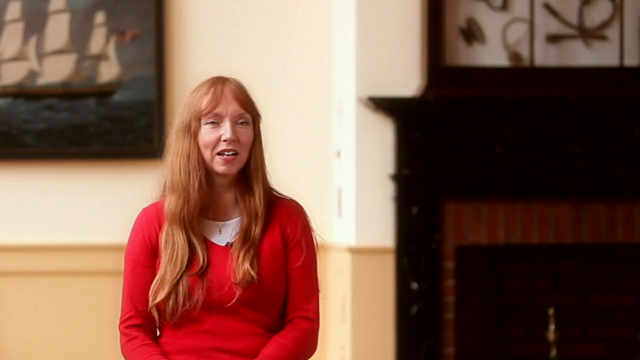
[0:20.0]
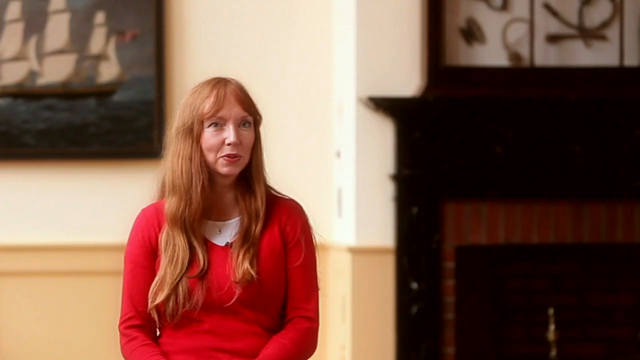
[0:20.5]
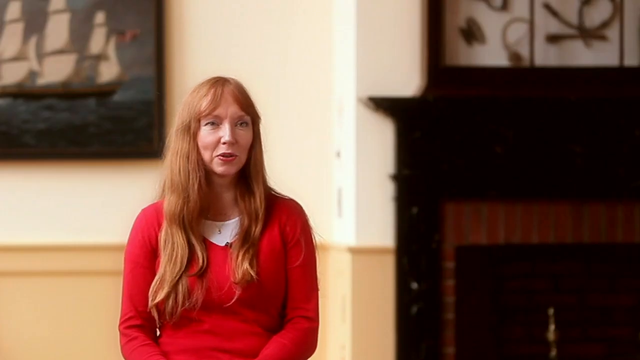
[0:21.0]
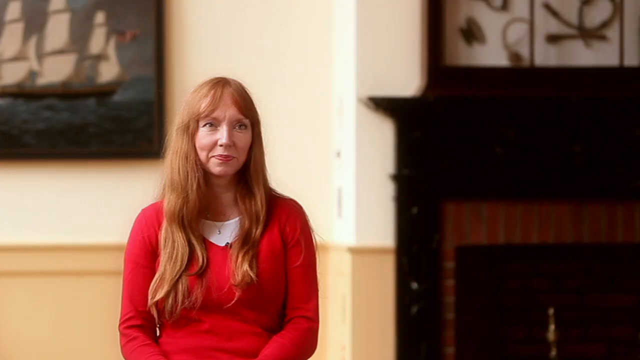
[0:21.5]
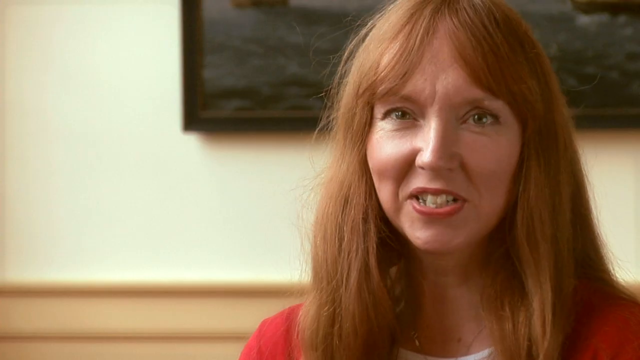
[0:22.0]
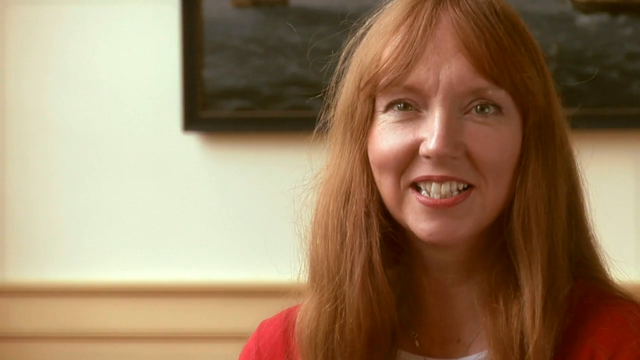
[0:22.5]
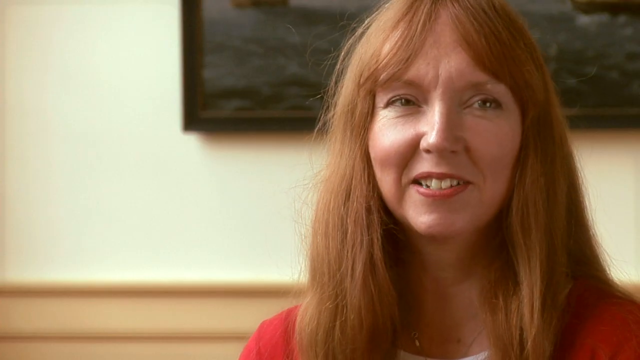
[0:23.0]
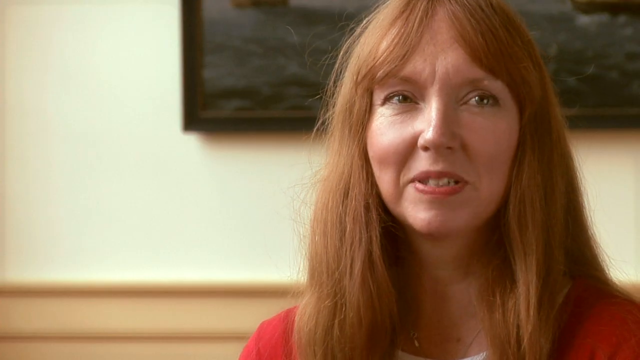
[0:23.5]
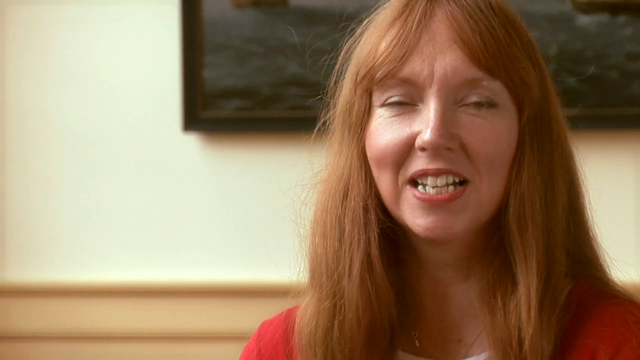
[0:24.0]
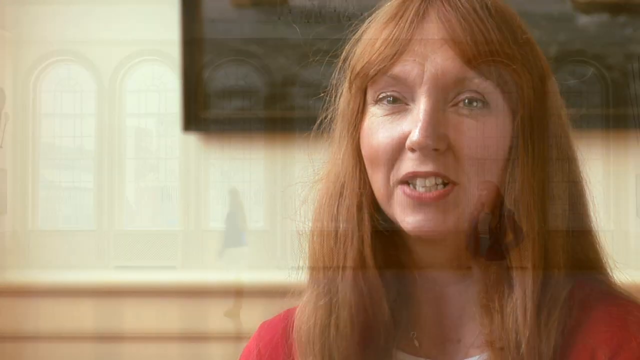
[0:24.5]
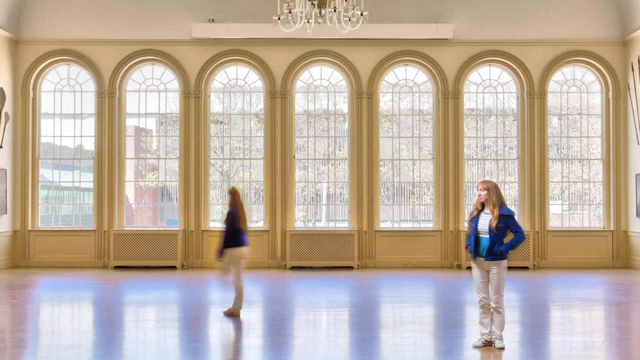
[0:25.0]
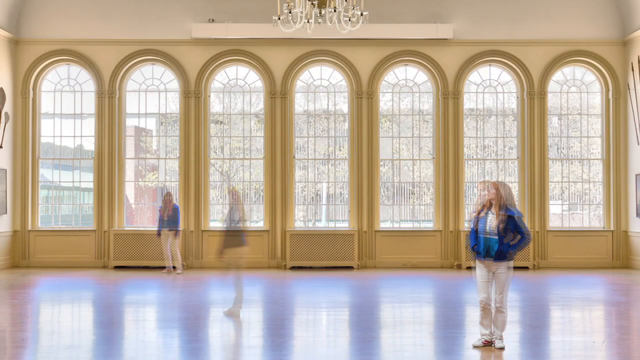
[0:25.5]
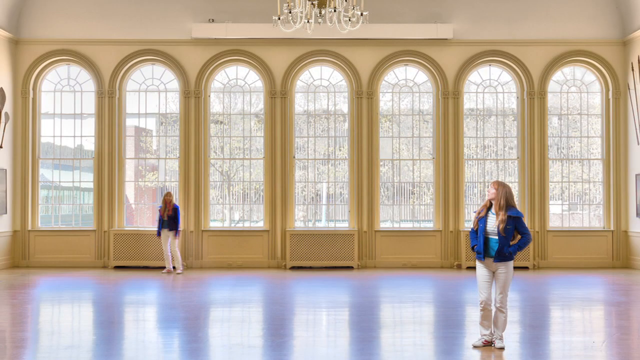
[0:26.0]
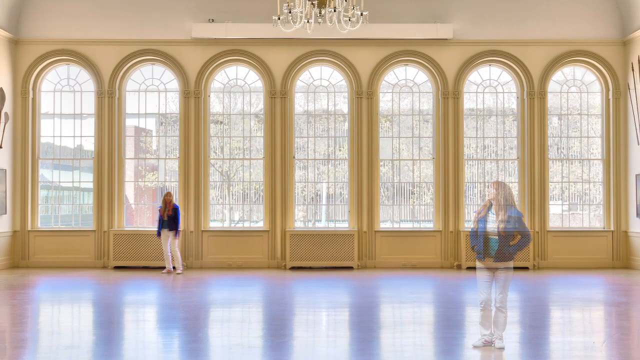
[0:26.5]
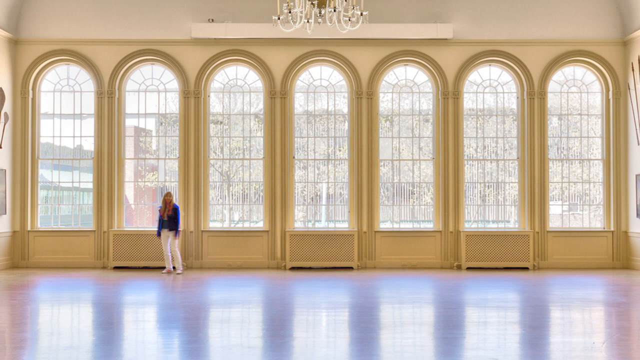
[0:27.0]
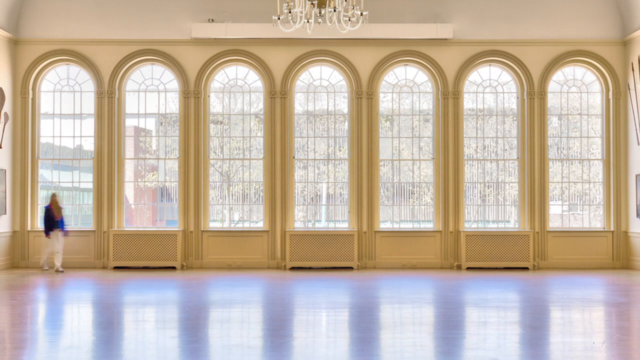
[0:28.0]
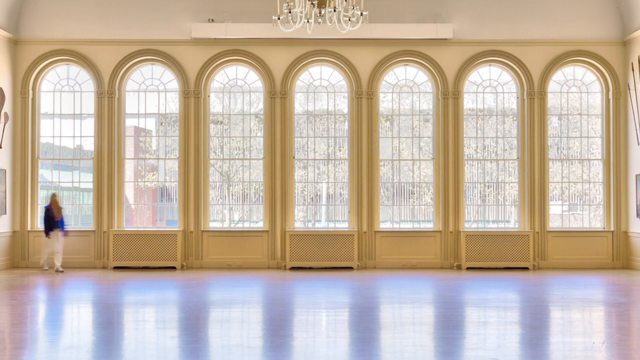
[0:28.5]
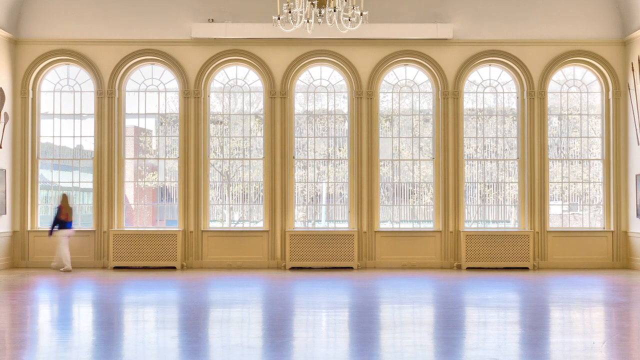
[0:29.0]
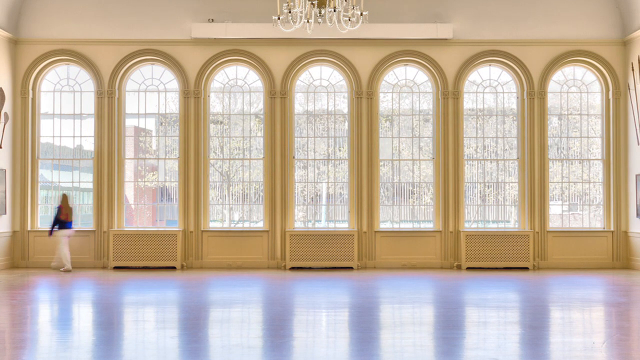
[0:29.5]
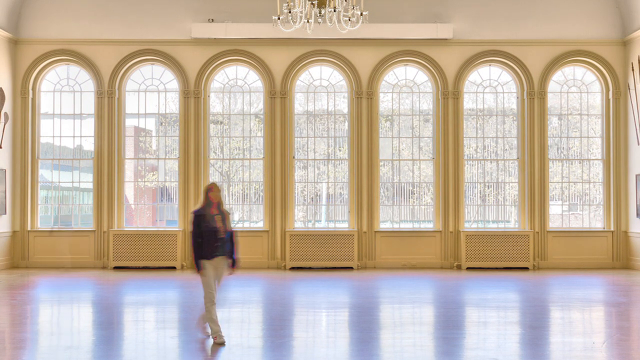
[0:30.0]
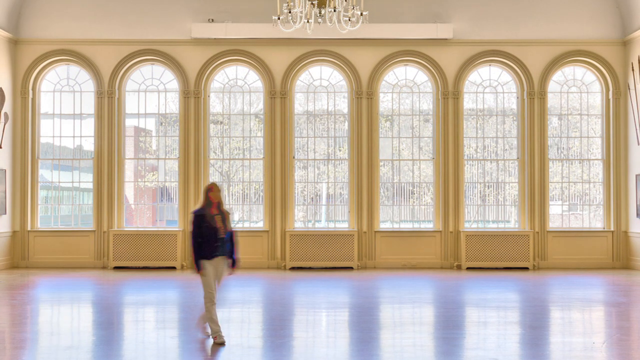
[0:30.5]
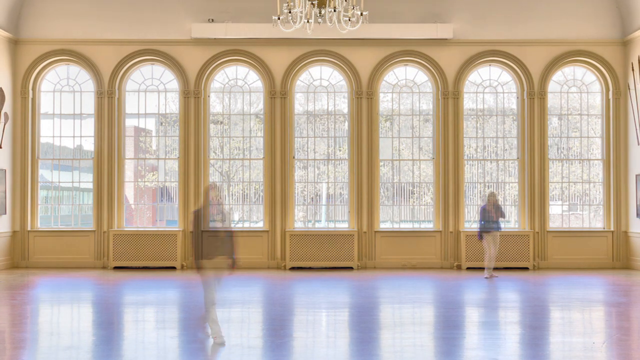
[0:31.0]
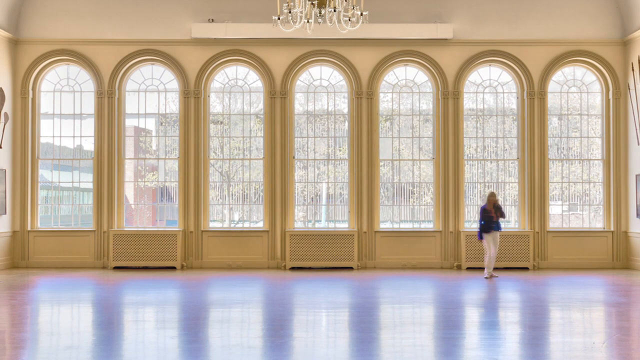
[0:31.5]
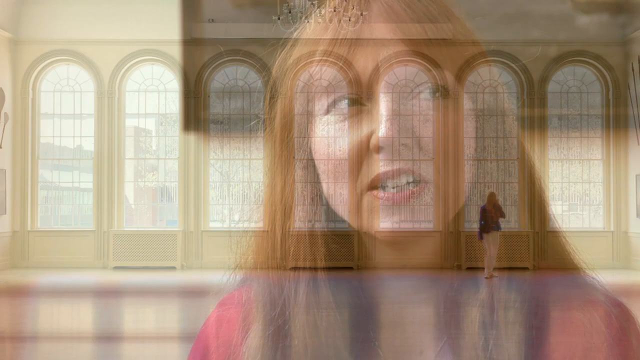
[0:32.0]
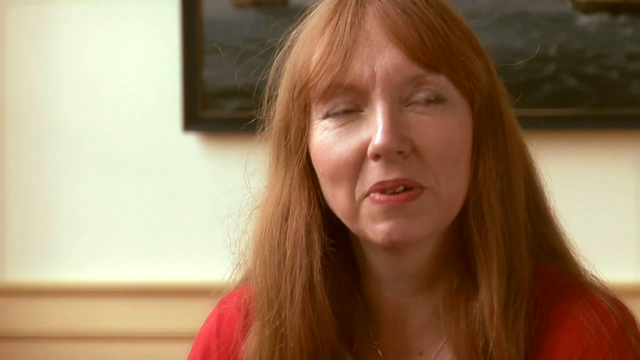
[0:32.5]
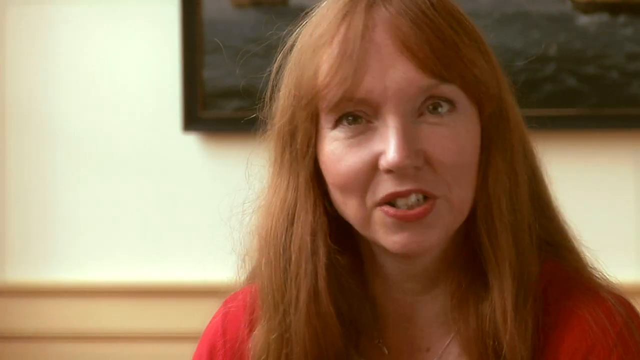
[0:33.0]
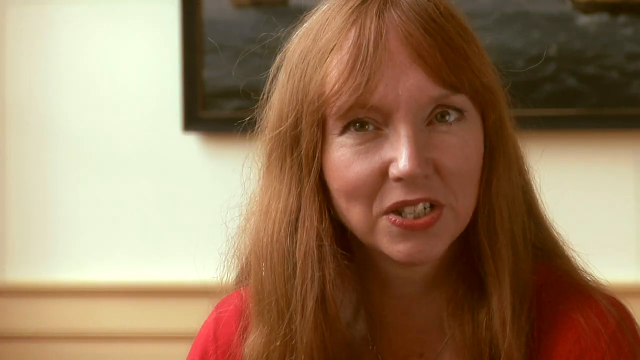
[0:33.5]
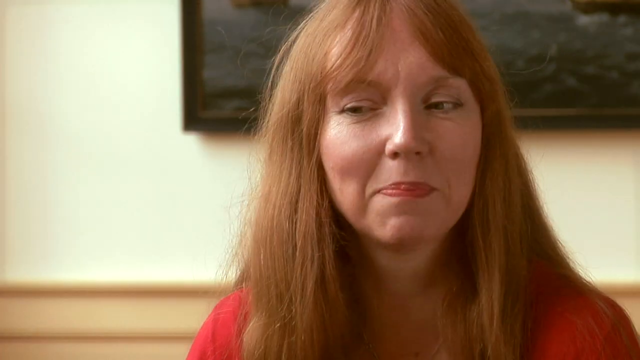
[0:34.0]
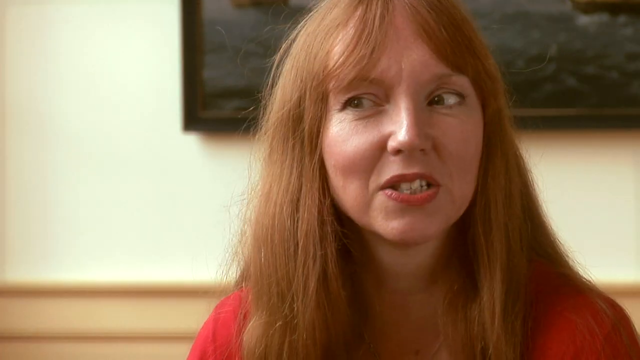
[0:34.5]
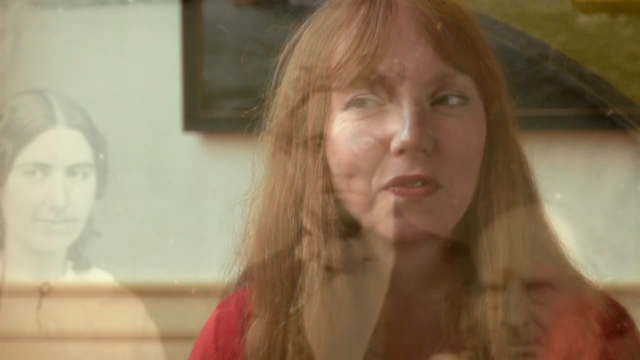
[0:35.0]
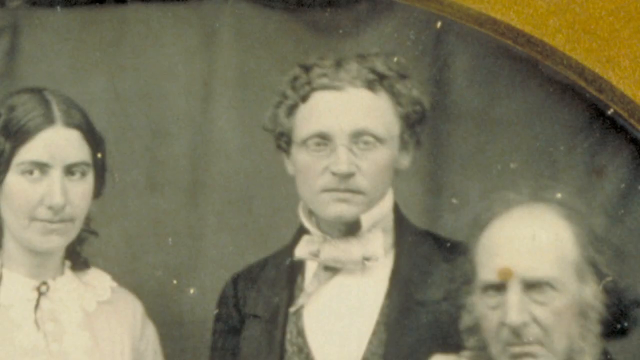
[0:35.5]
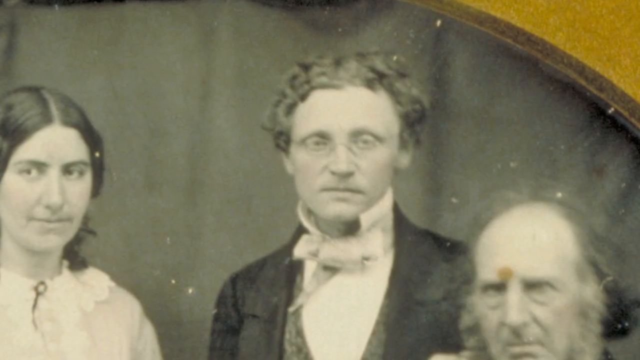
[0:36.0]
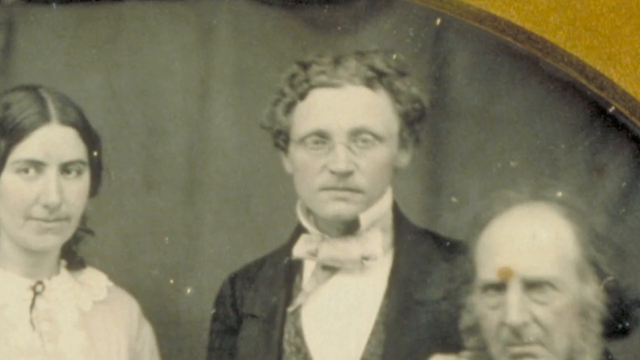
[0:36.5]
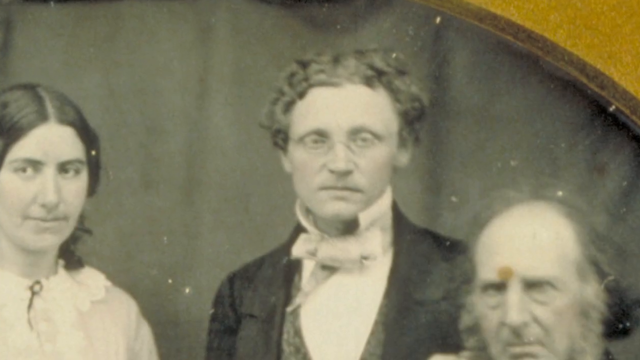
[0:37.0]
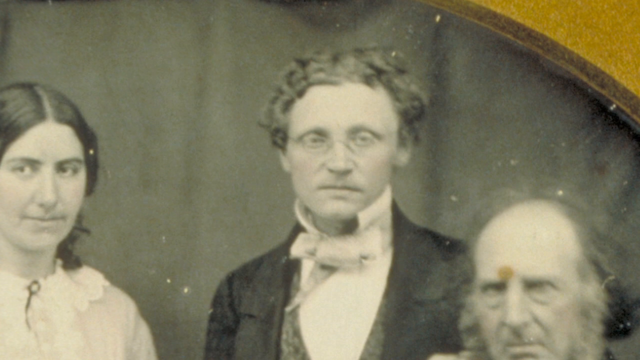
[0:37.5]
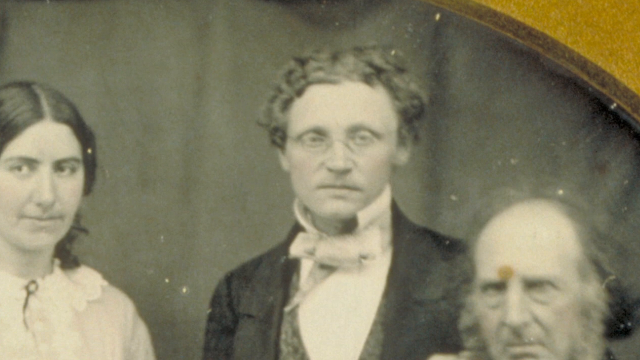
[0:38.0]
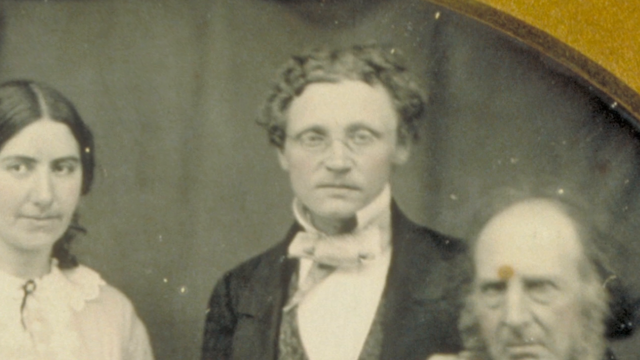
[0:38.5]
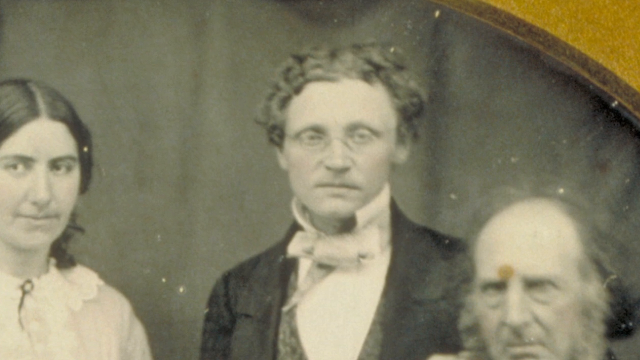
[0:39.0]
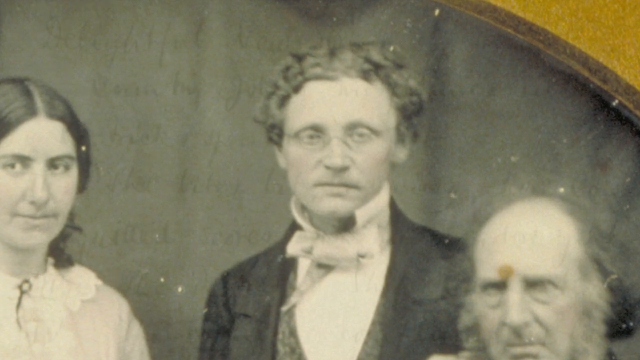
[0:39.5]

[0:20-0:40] A woman is on the left-hand side of the frame. She has longer, reddish-brown hair and wears a bright red sweater with a white shirt underneath. The background looks like an older house, with a picture of a sailboat on the upper left wall; the walls are white on top and cream-colored on the bottom, and there appears to be a brown fireplace on the right-hand side behind her. She talks while looking at the camera. A hard cut shows her on the right-hand side in a much closer shot of her face. The video then cuts to what looks like a ballroom, with cream-colored arched windows in the background and a chandelier dead center at the top. She appears to be superimposed twice: one image of her on the right in front and another on the left in the back. The one on the right disappears while the one in the back moves around a little. The video cuts back to the close-up of the woman on the right-hand side, then to an old-timey black-and-white picture showing a woman on the left, a man in the center, and a balding person in the bottom right. The camera very slowly zooms in on this picture, revealing some greenish yellow in the upper right corner.